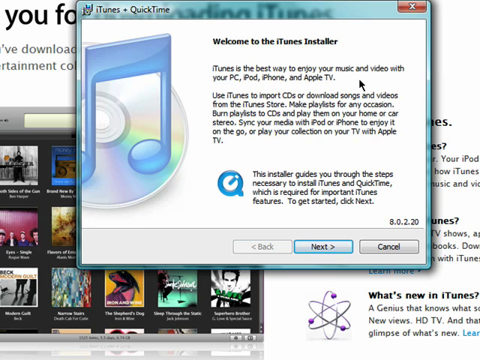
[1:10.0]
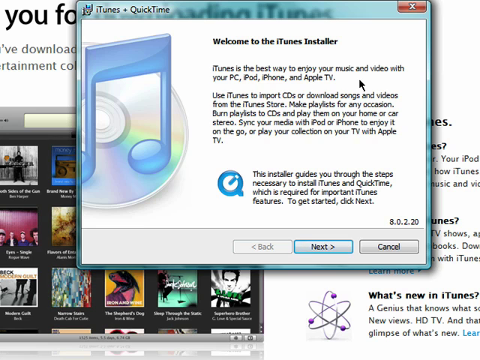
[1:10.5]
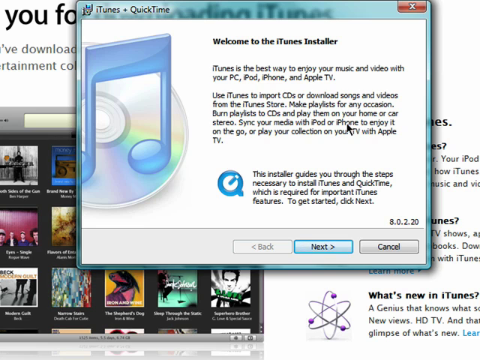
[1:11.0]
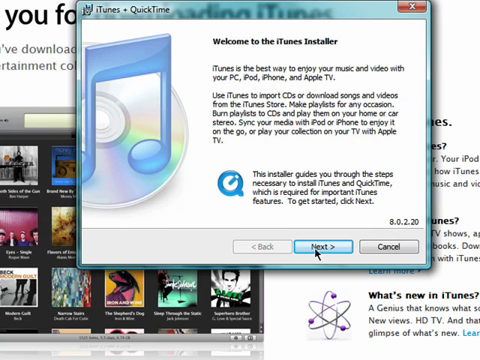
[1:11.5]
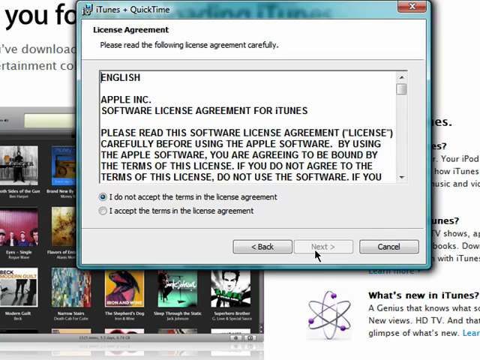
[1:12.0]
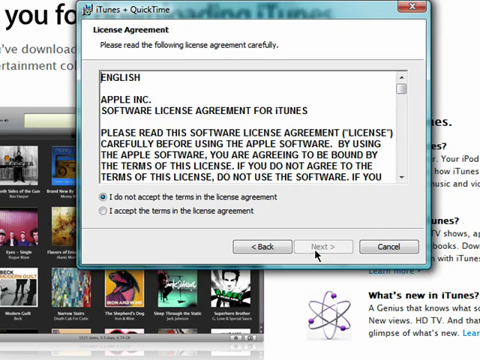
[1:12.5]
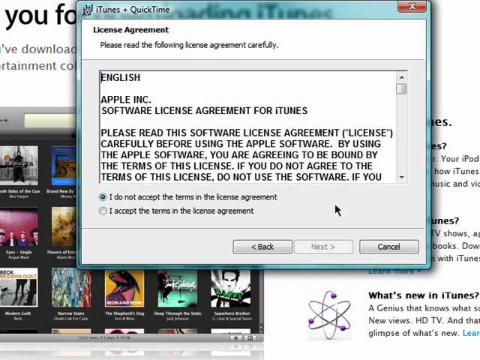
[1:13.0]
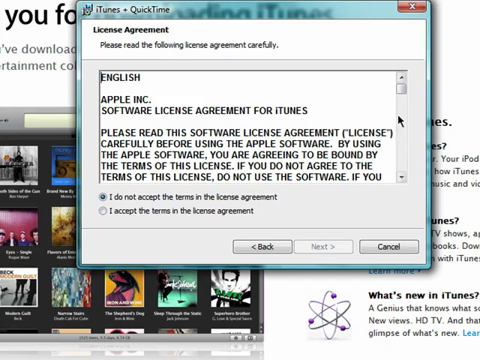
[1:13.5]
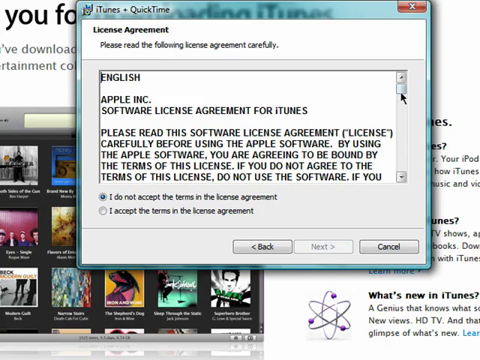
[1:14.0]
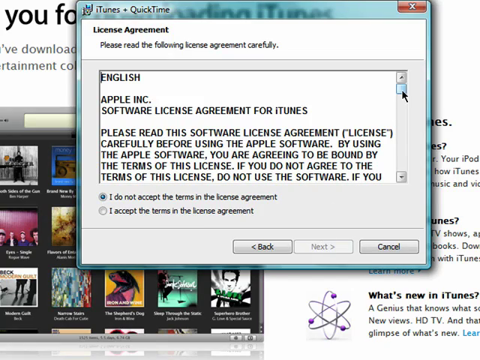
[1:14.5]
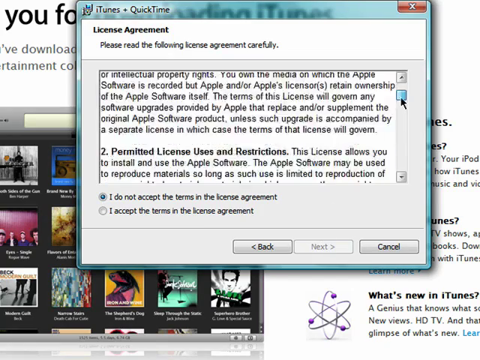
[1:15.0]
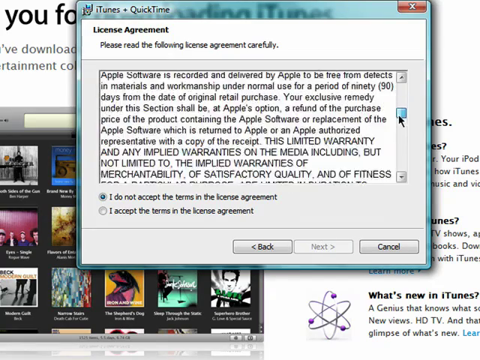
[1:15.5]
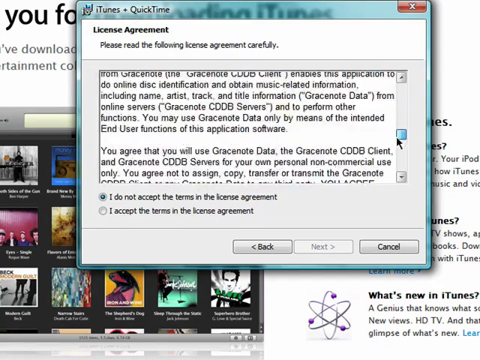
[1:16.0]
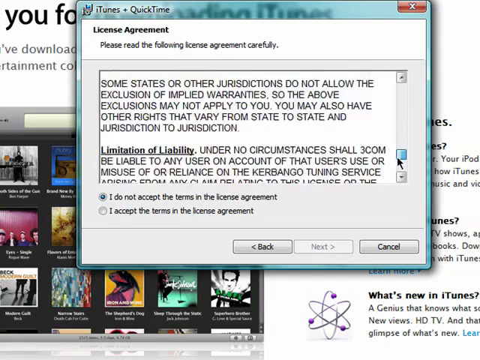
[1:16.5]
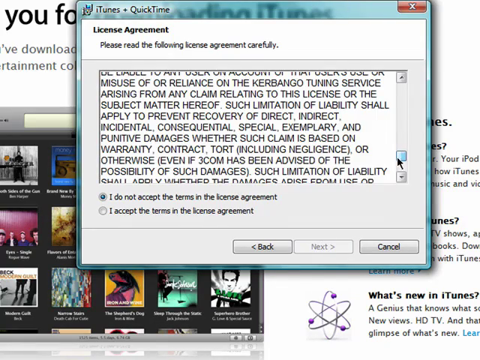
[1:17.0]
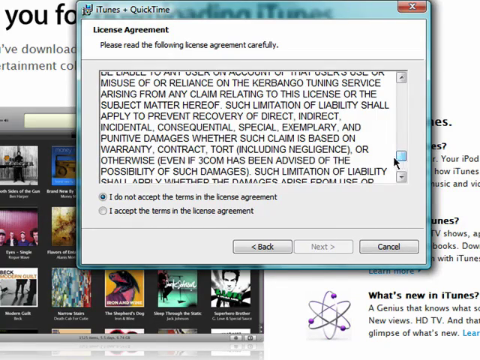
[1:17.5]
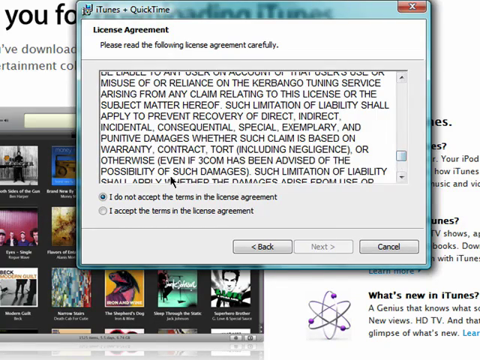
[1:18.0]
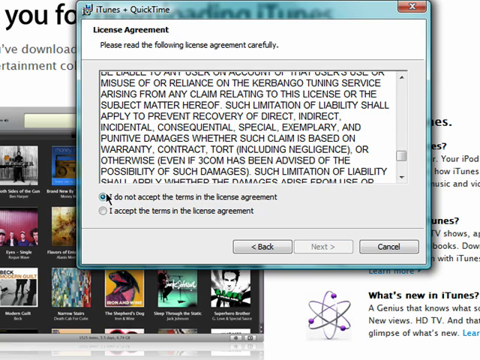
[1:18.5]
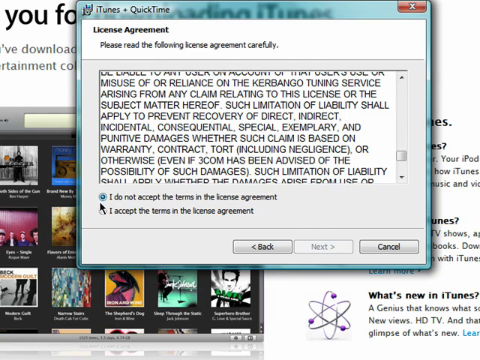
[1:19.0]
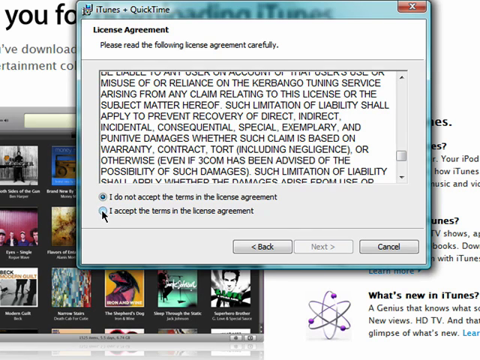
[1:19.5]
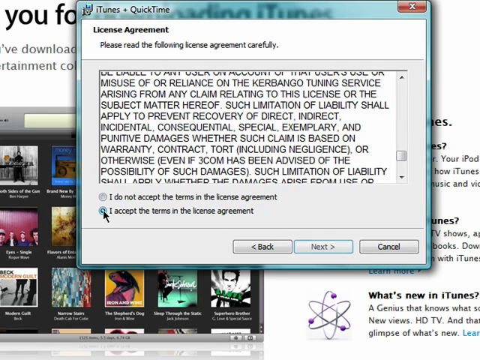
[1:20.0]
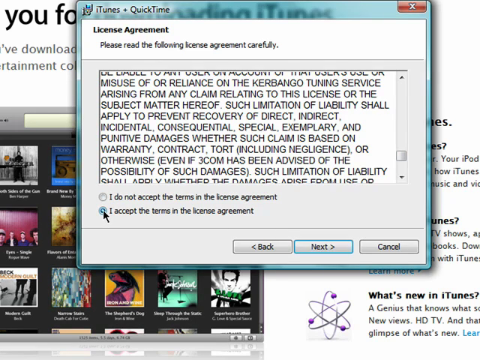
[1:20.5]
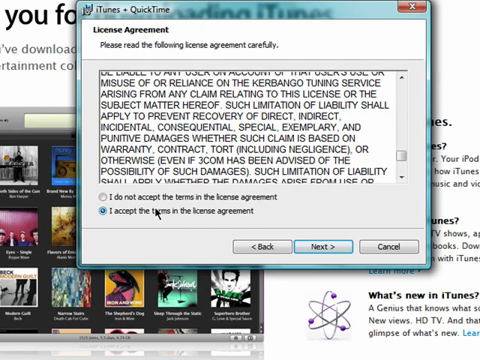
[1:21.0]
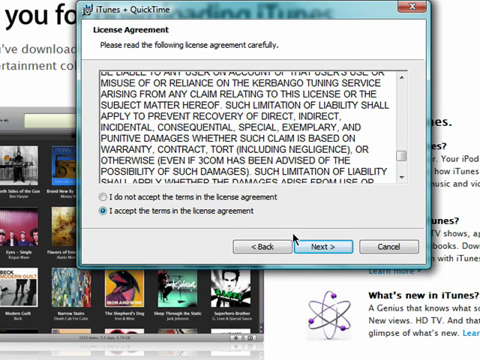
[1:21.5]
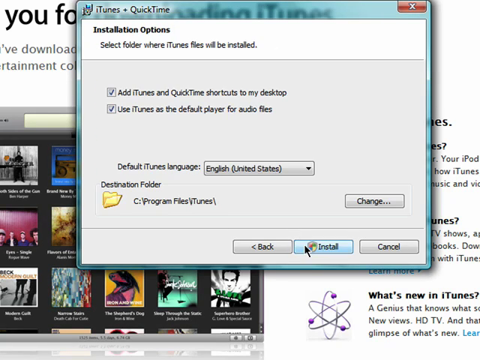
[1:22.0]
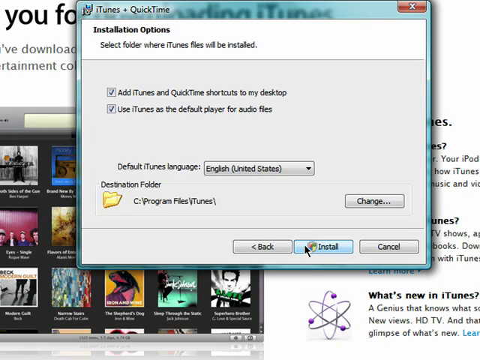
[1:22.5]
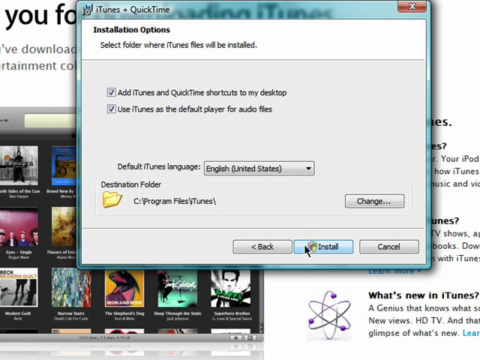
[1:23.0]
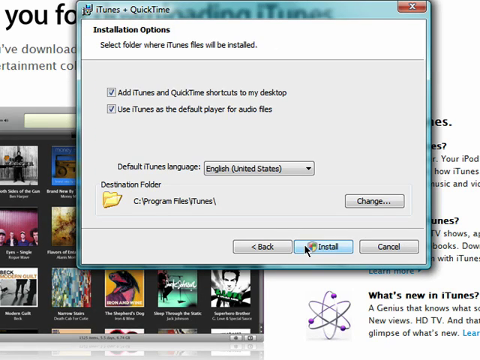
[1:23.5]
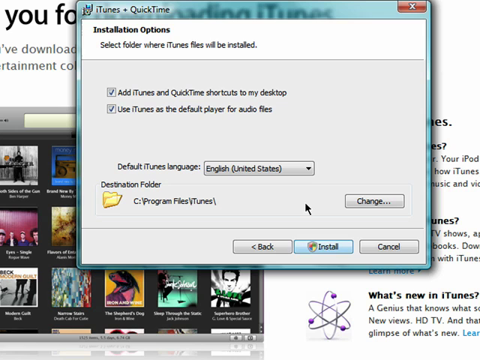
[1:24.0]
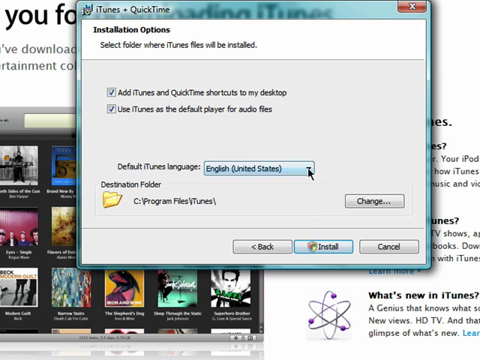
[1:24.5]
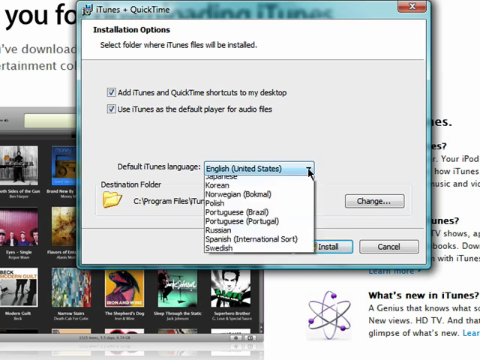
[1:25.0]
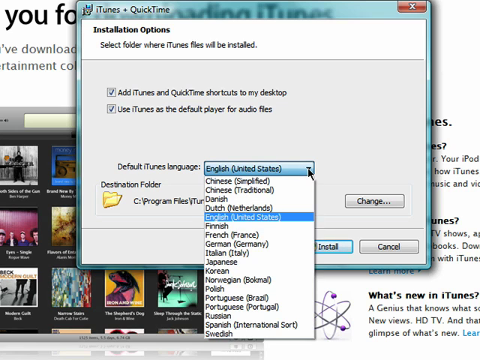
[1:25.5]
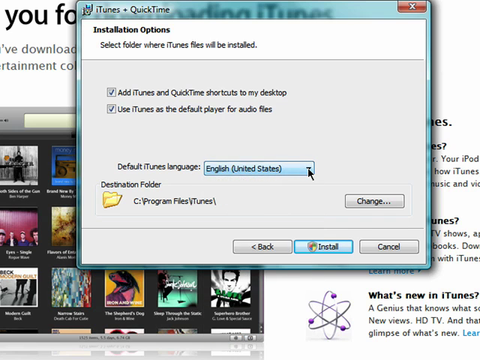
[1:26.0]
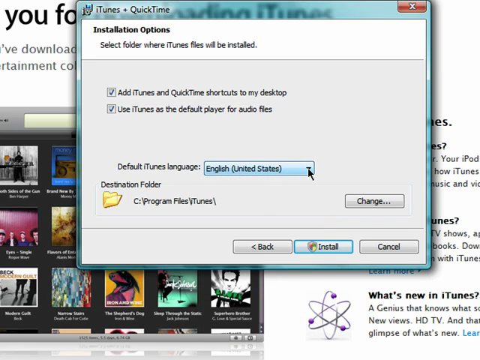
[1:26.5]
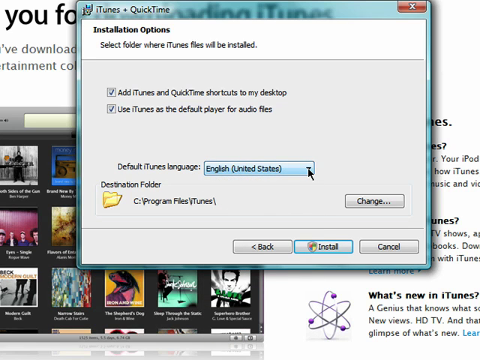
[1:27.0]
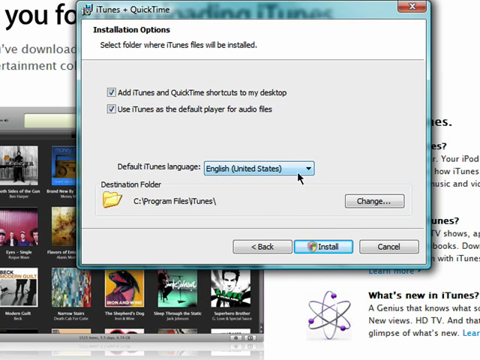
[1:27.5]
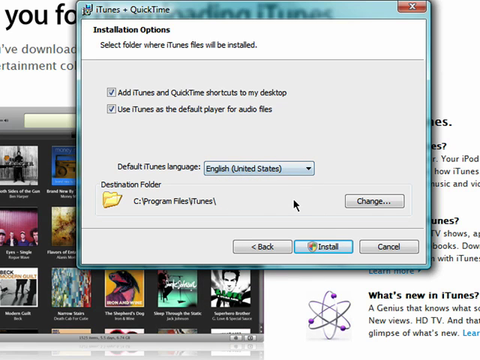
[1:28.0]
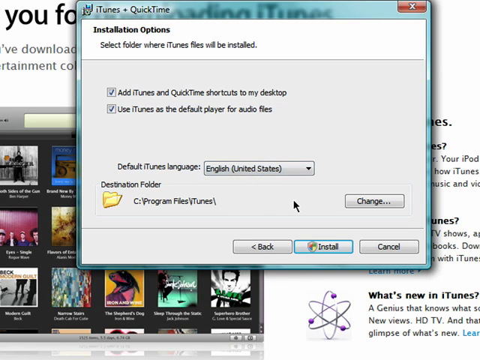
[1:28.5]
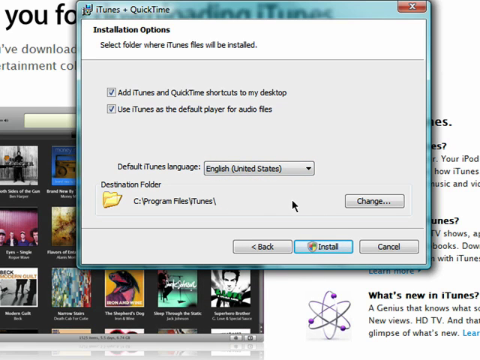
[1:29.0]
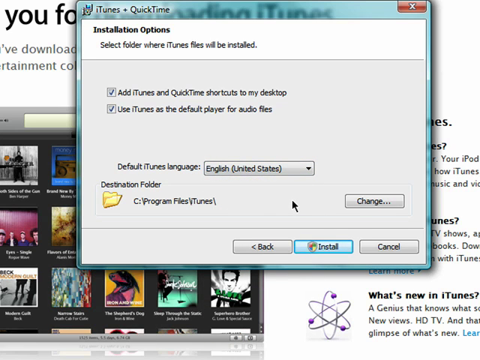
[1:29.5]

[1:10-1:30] A pop-up is in the upper left-hand corner. It says "iTunes + QuickTime" and shows a partial CD with a double music note. To the right, in black, it says "Welcome to iTunes Installer," followed by text: "iTunes is the best way to enjoy your music video with your PC, iPod, iPhone, and Apple TV. Use iTunes to import CDs or download songs and videos from the iTunes store. Make playlists for any occasion, burn playlists to CDs and play them on your home or car stereo. Sync your media with iPod and iPhone to enjoy it on the go, or play your collection with your TV with Apple TV." The person appears to be about to click the Next button. A license agreement appears; the person scrolls down quickly, switches the selection from "I do not accept the terms" to "I accept the terms in the license agreement," and clicks Next. The screen then says "Installation Options" and "Default iTunes Language," and the person selects English (United States).